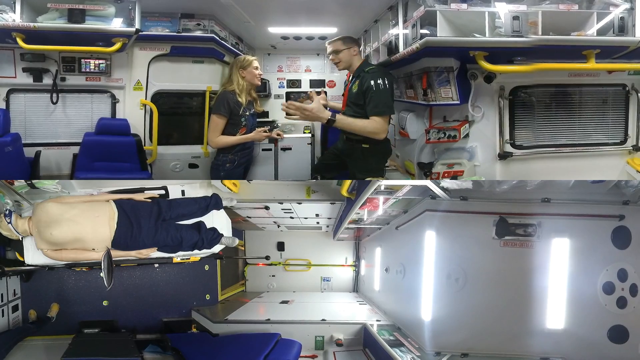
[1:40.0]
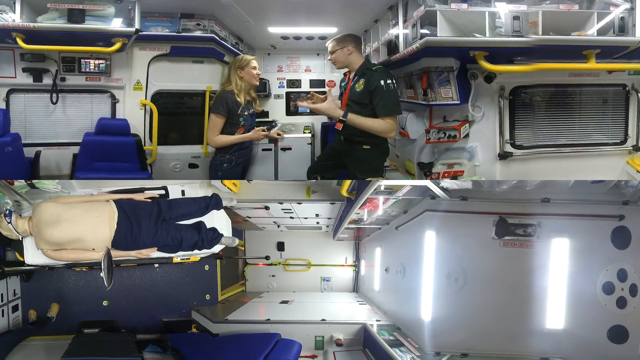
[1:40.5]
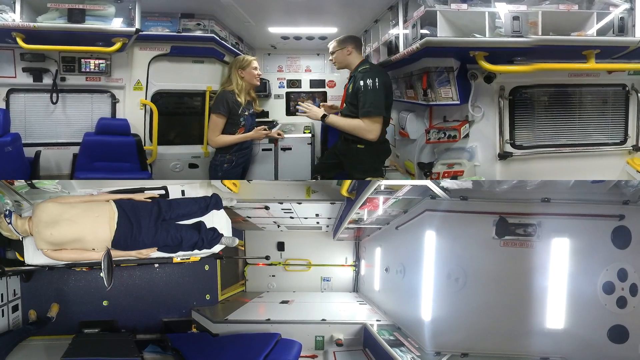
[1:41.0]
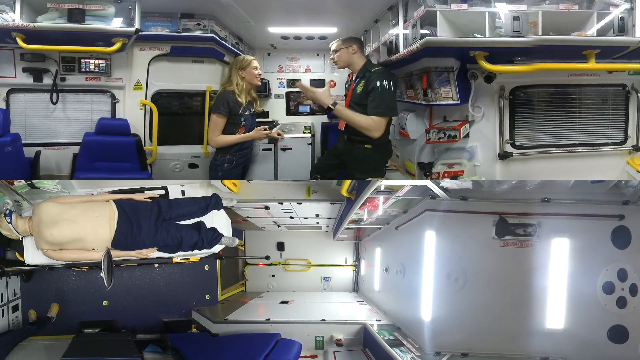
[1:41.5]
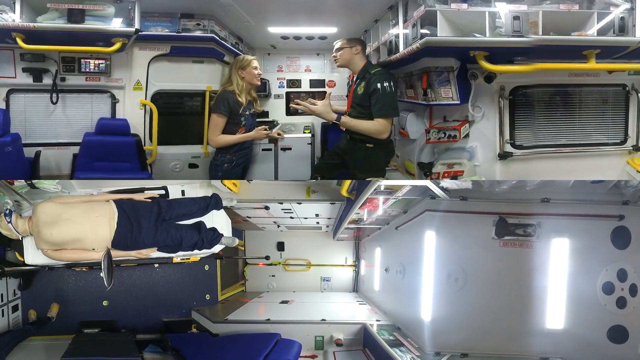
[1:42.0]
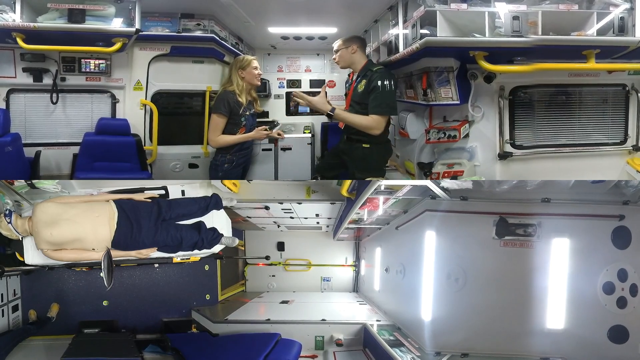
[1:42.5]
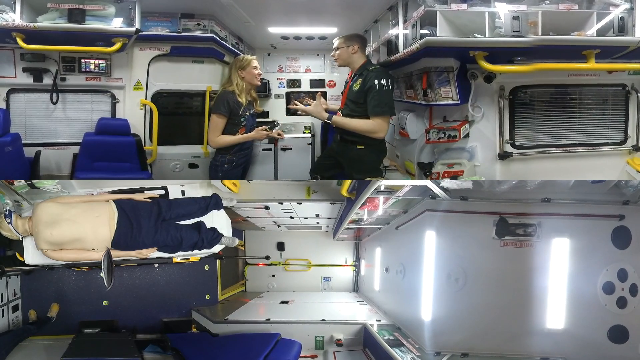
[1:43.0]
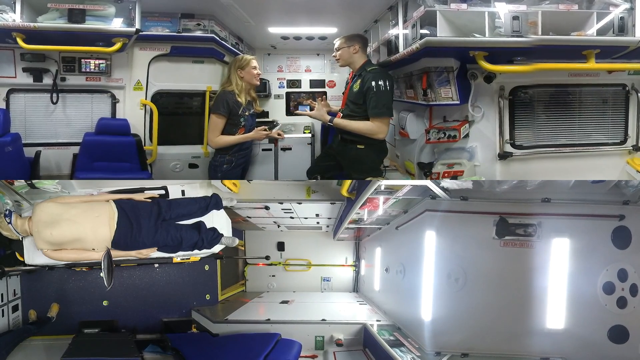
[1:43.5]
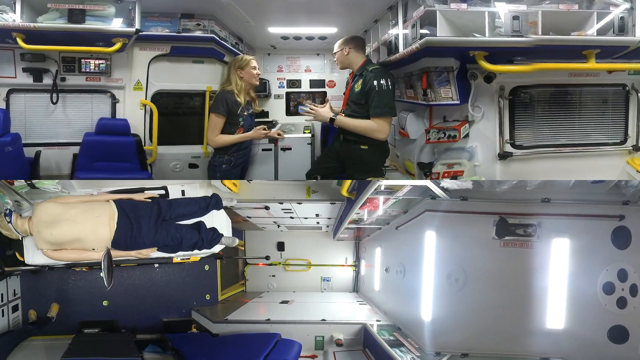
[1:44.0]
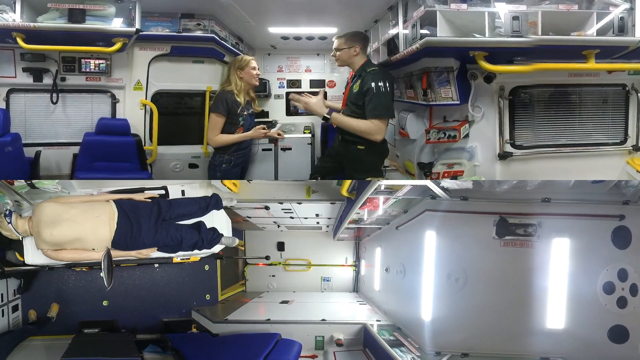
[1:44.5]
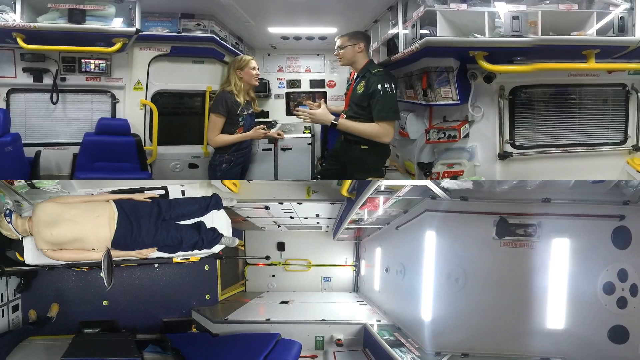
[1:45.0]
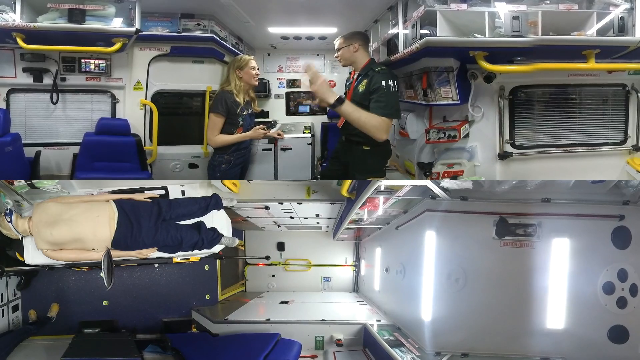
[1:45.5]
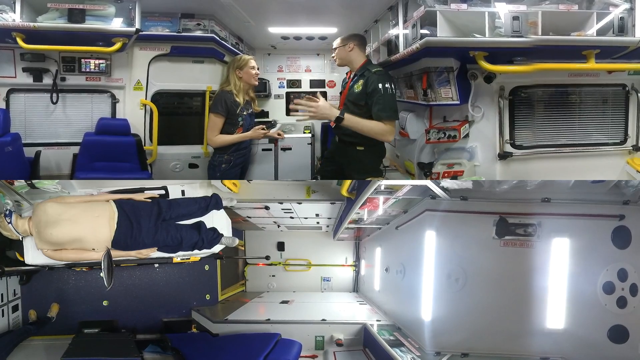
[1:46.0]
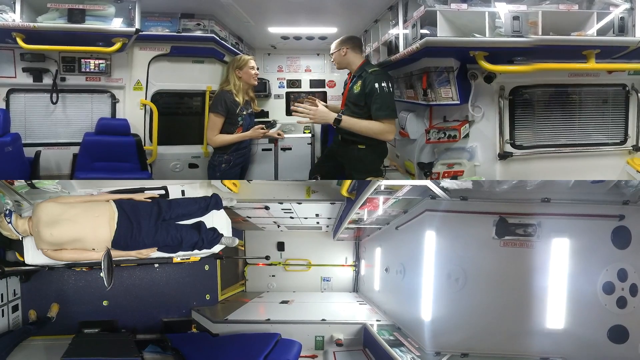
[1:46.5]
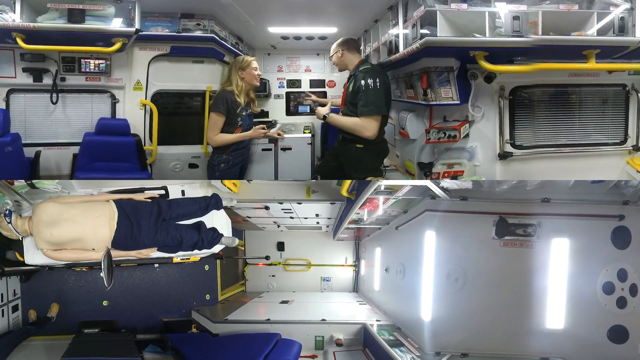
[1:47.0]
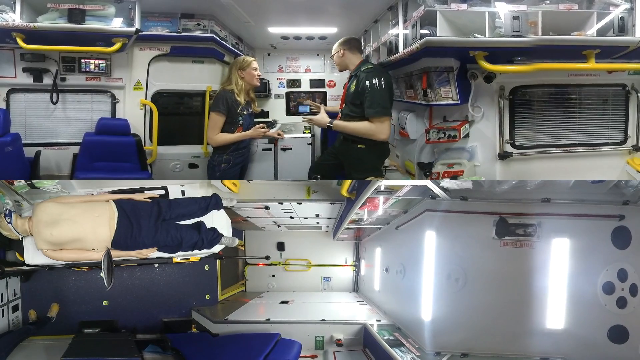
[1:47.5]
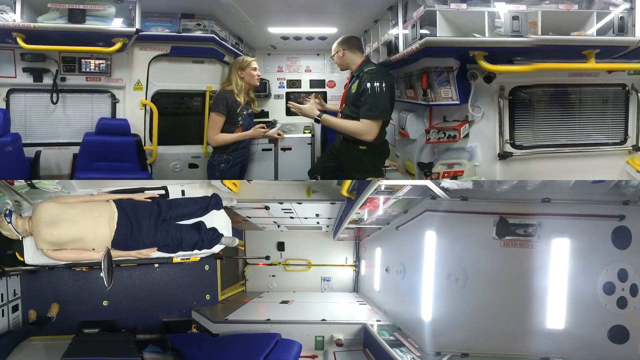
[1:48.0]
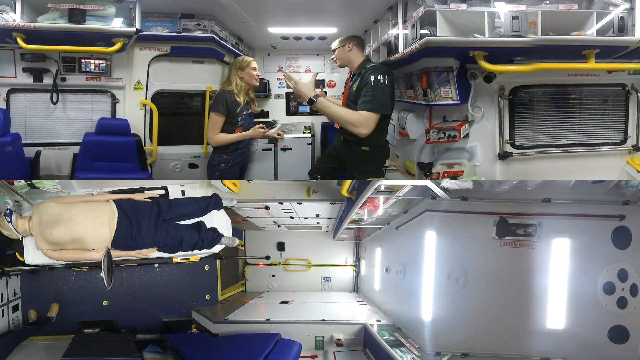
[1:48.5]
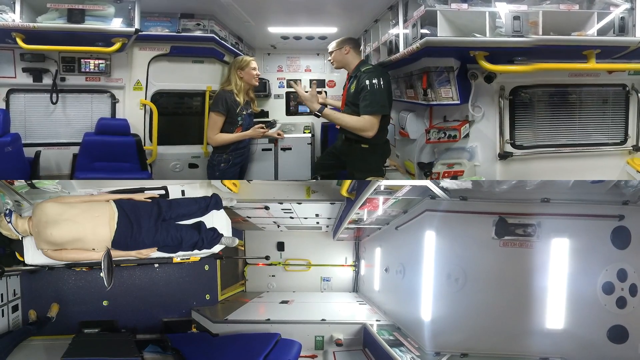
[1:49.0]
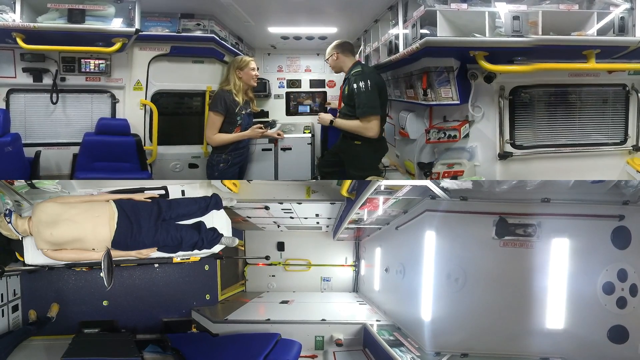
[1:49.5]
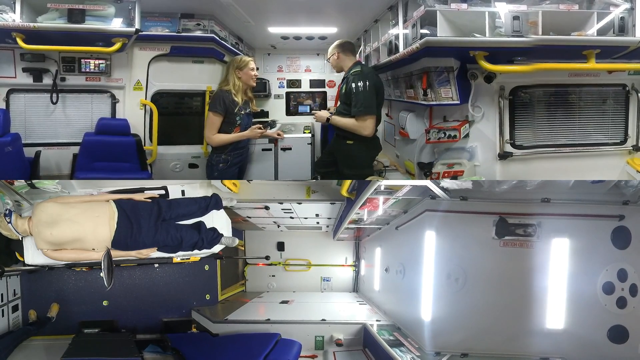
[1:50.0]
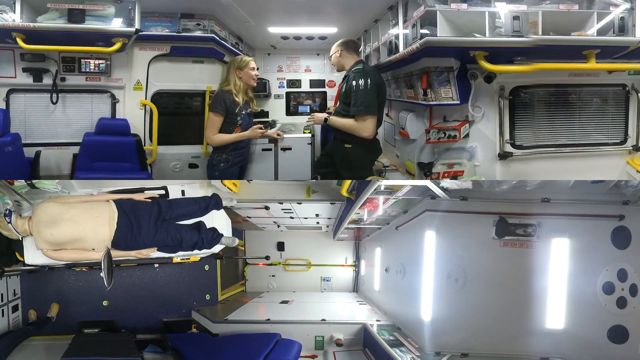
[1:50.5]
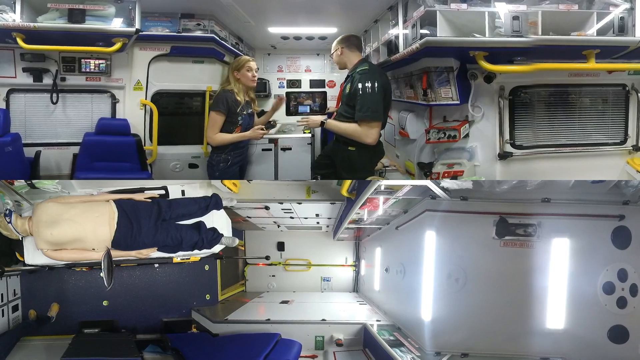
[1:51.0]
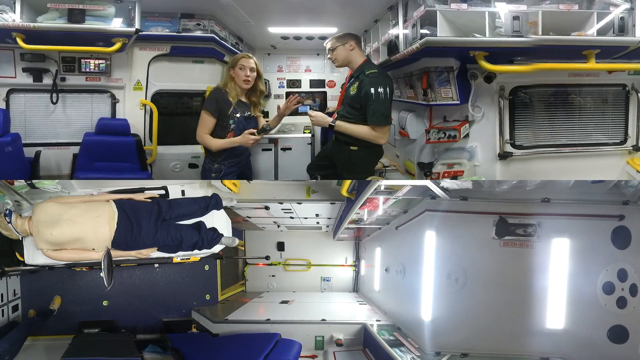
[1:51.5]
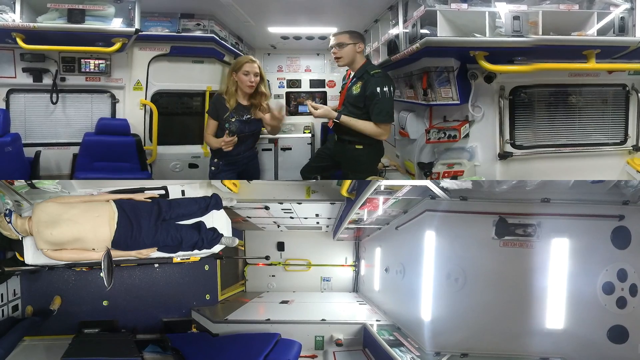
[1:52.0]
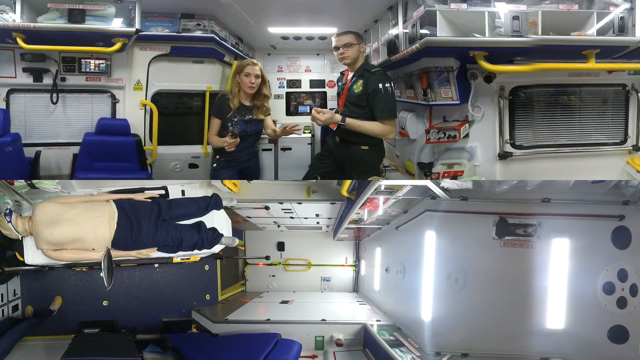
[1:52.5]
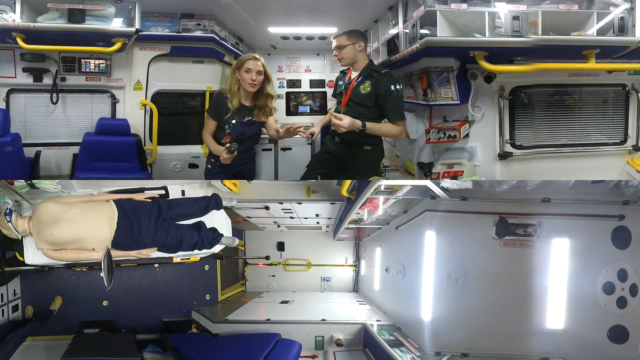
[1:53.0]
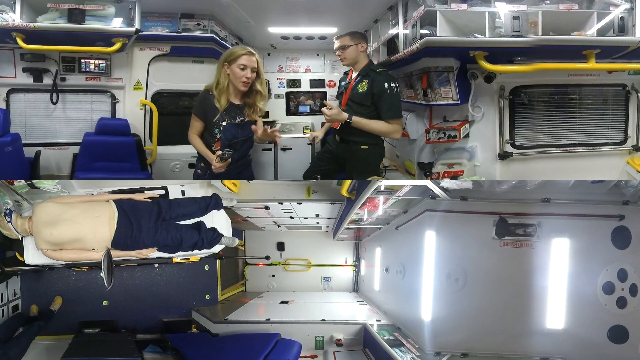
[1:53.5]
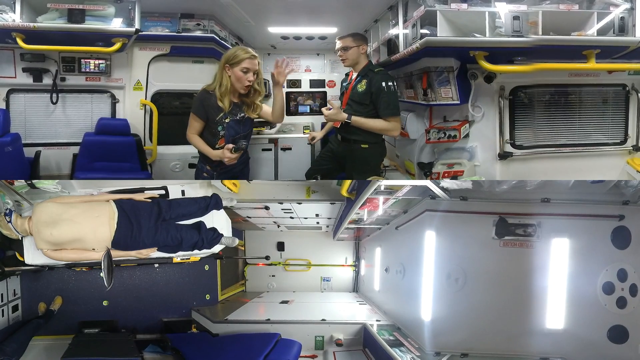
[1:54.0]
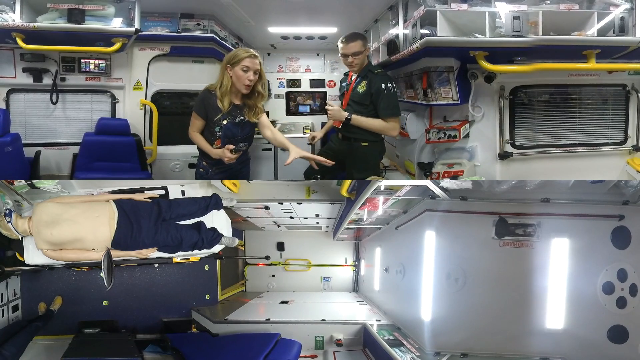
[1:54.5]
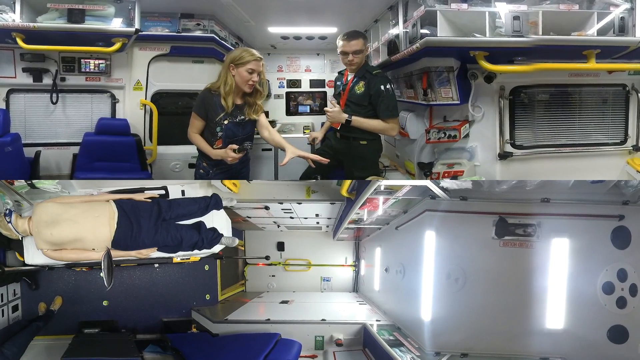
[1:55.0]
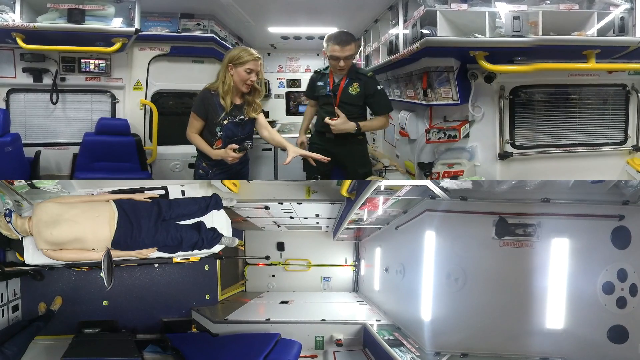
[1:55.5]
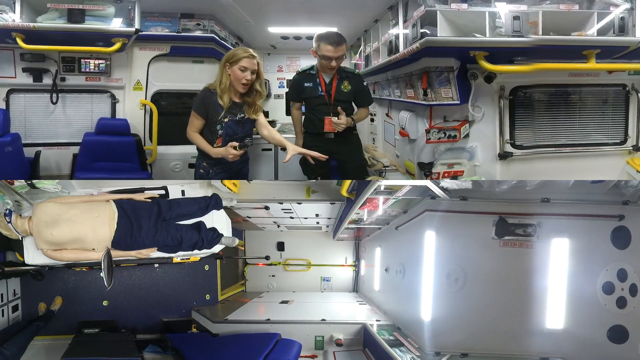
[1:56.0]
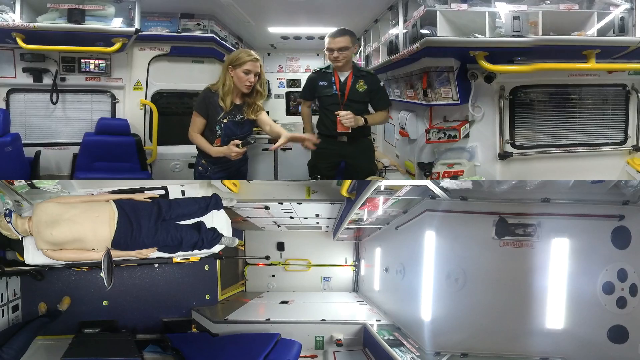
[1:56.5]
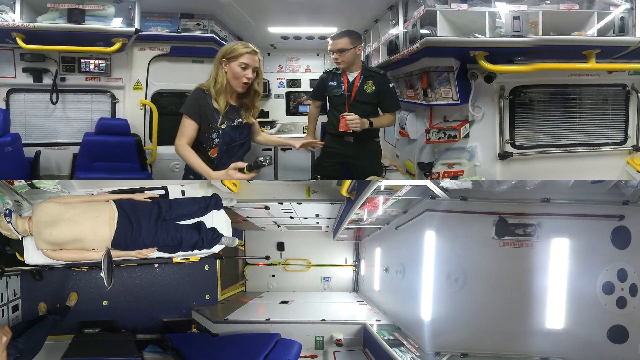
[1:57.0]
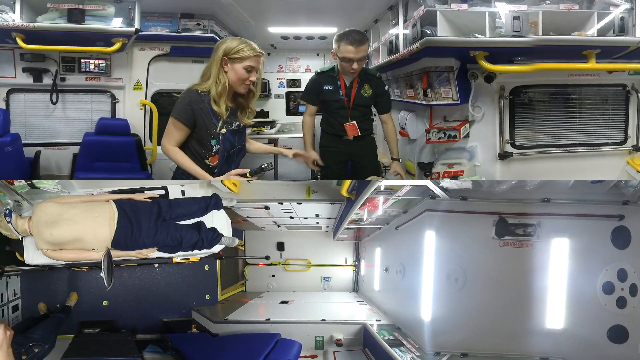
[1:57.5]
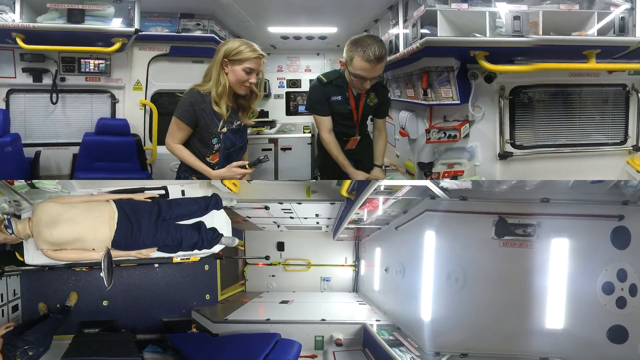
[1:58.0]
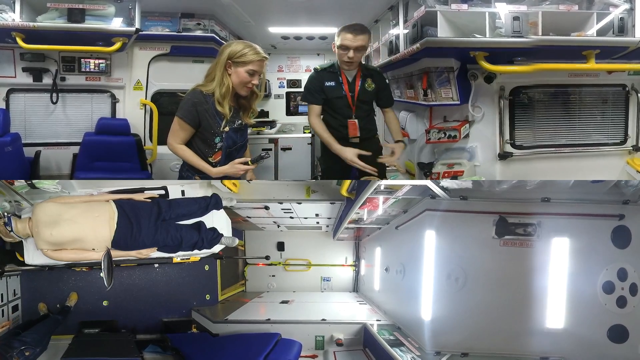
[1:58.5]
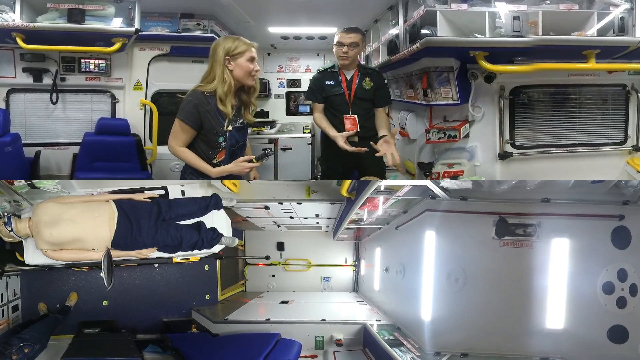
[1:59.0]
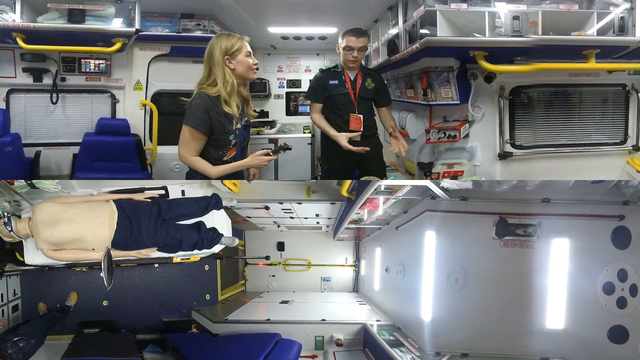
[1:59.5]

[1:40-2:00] The man talks to the woman again, and they are now in a different position, so the thing they had been blocking is visible. It looks like some type of monitor; it is on and running, with something very small on it that possibly moves, but it is hard to make out. They are not really looking at the monitor or facing it, but talking to each other. Then they start turning away from it, apparently turning their attention to the dummy that has been lying there. He does most of the talking while she responds. She turns toward the camera and stretches out, and this time it is her hand rather than just her arm that looks unrealistically large. She appears to gesture toward the dummy, as if they might be about to give it some attention. Everything else looks roughly the same. On the right side of the structure, a door like a back door is visible, along with some yellow cords or something toward the back.